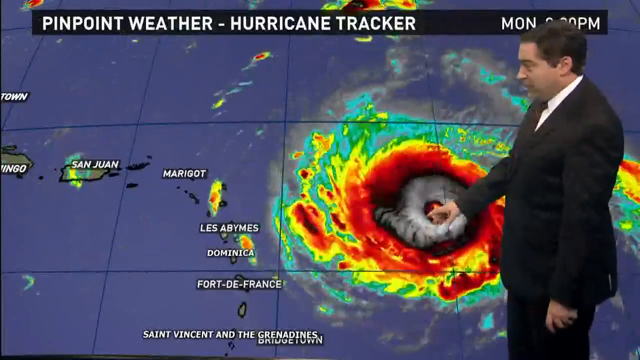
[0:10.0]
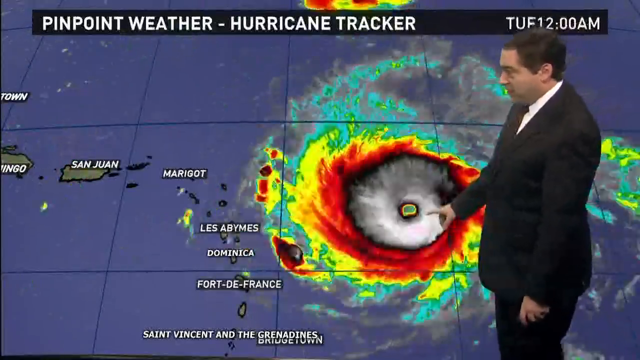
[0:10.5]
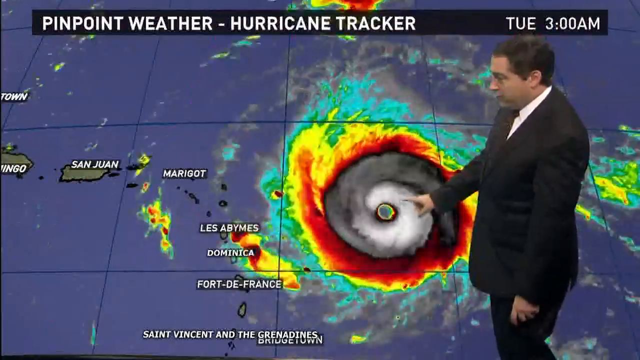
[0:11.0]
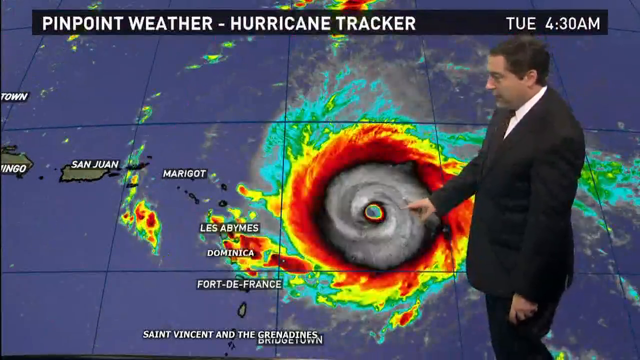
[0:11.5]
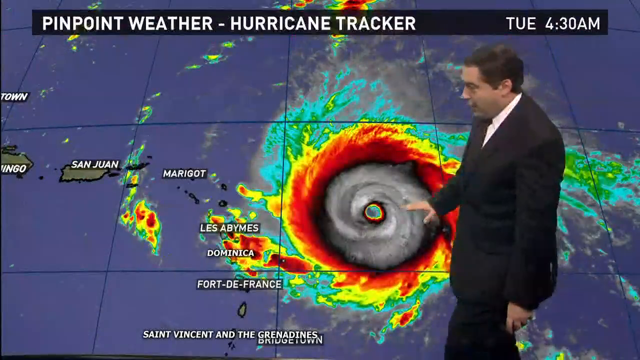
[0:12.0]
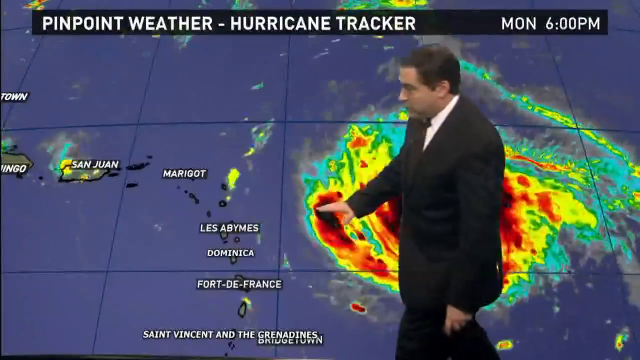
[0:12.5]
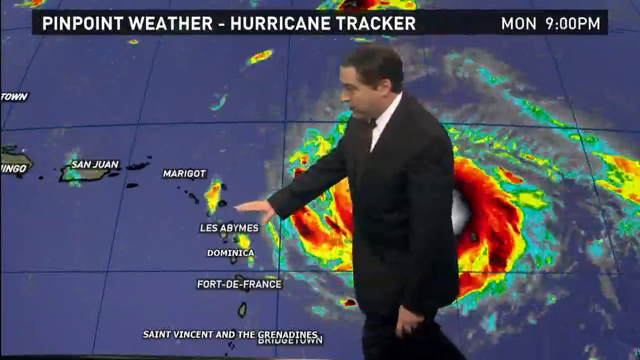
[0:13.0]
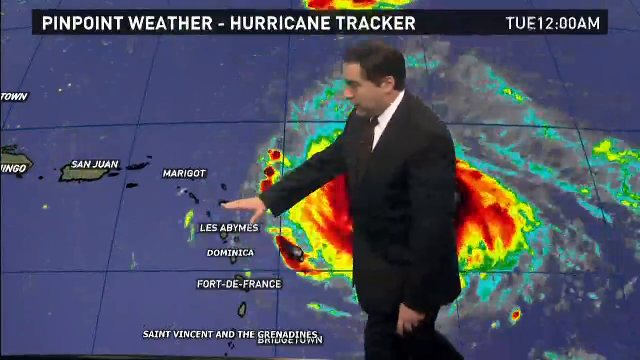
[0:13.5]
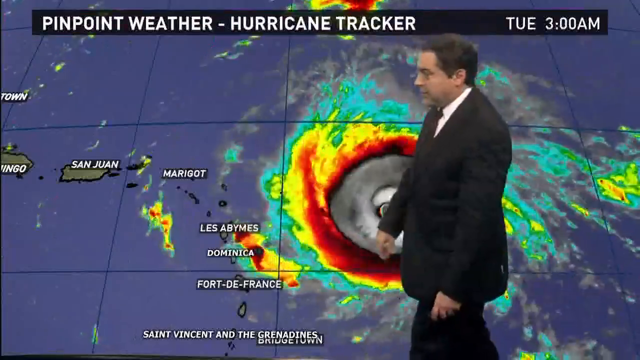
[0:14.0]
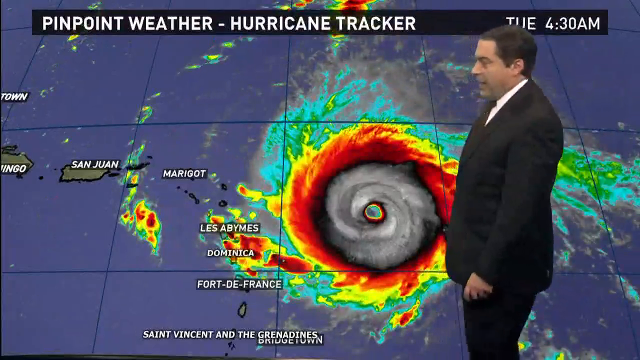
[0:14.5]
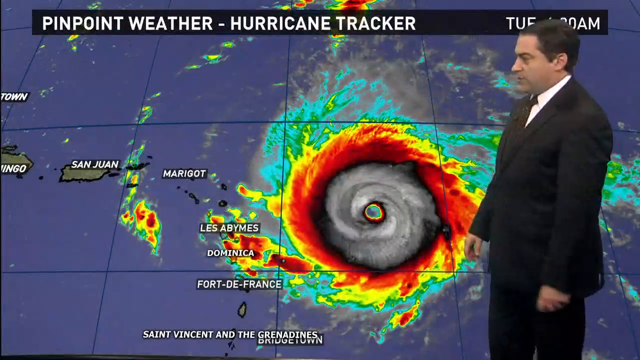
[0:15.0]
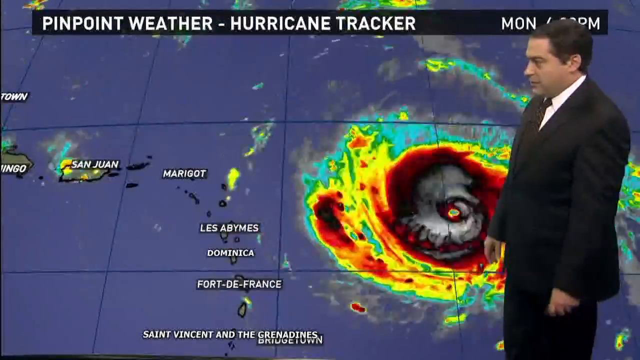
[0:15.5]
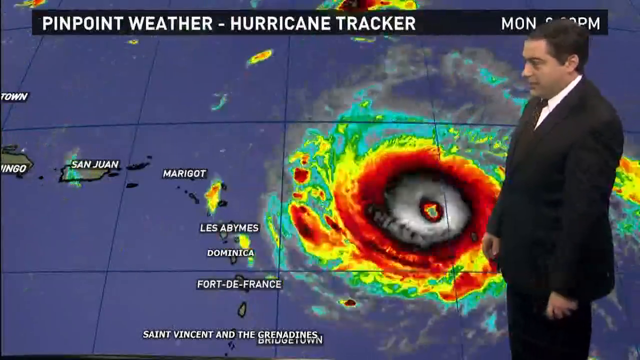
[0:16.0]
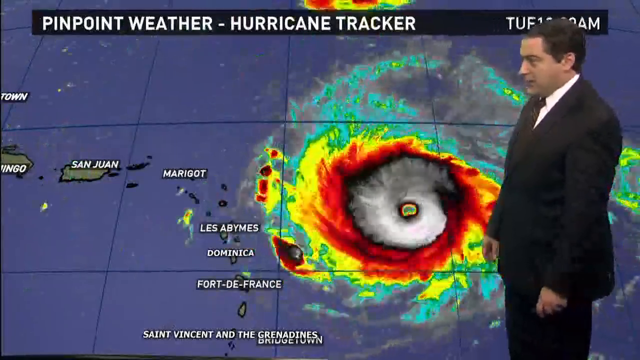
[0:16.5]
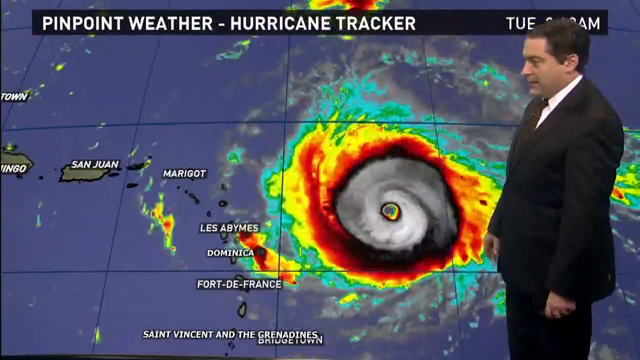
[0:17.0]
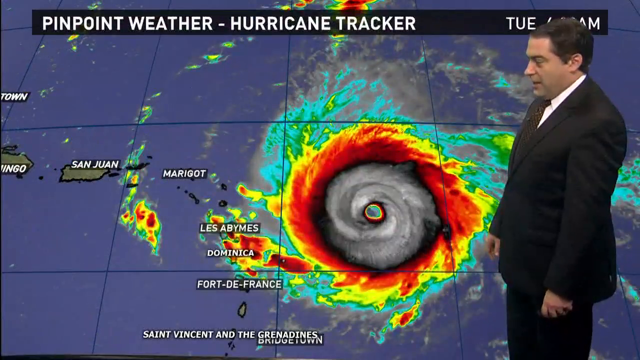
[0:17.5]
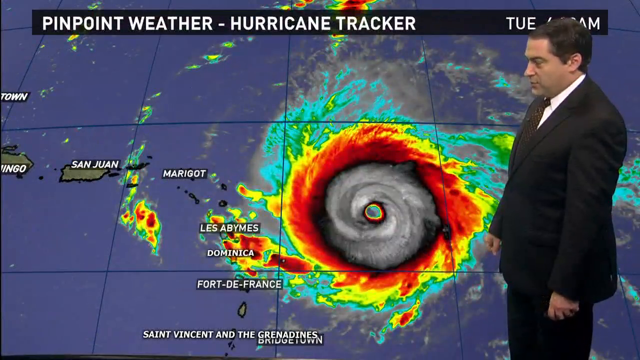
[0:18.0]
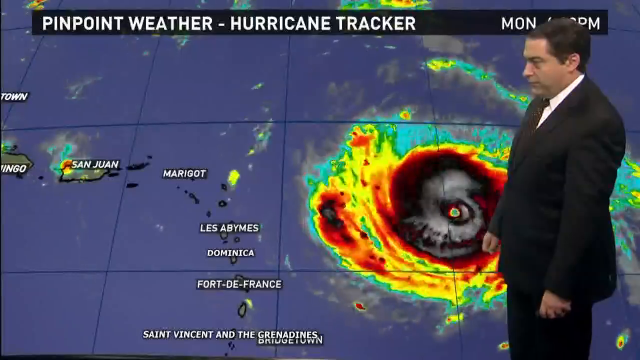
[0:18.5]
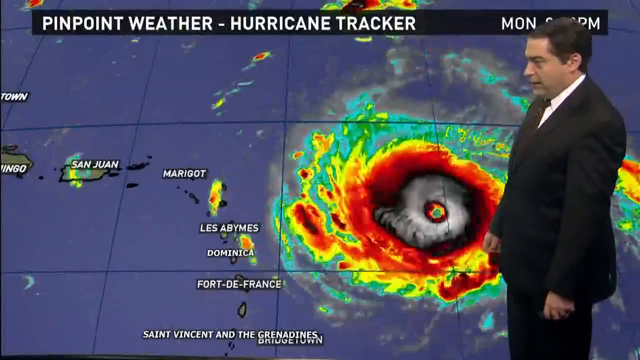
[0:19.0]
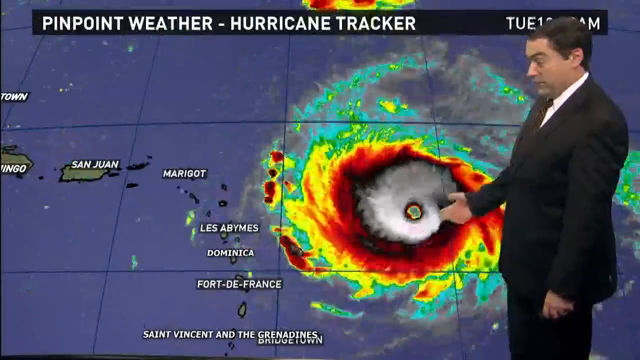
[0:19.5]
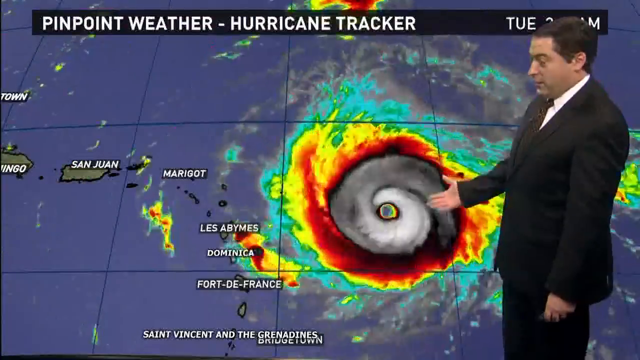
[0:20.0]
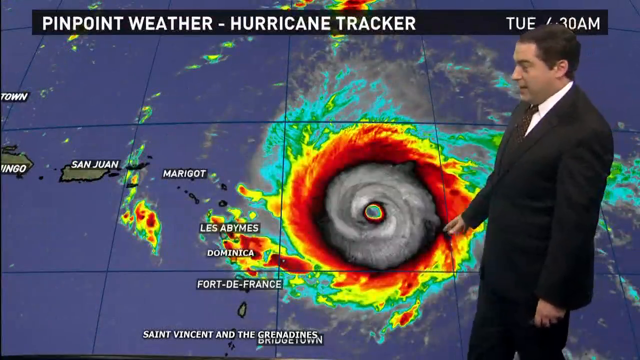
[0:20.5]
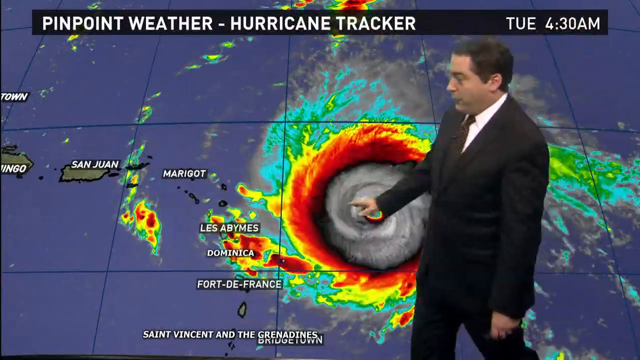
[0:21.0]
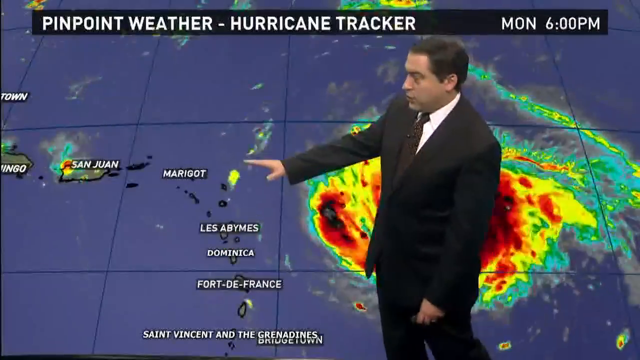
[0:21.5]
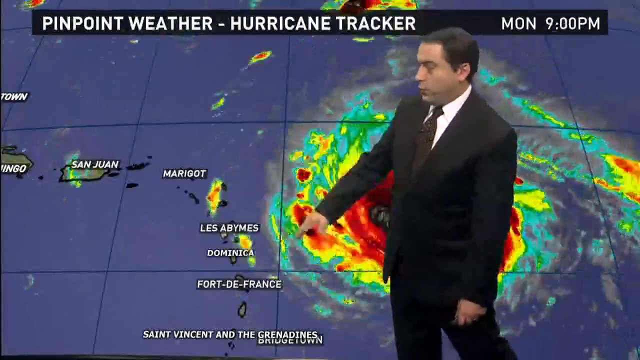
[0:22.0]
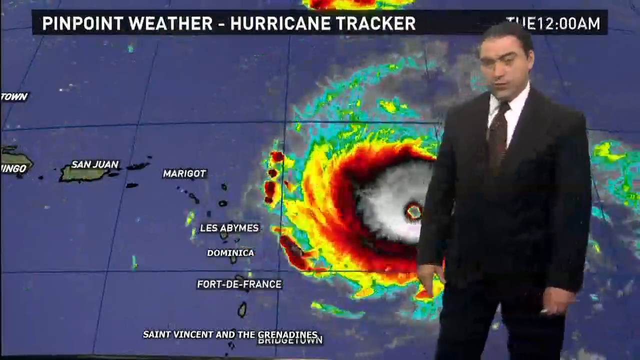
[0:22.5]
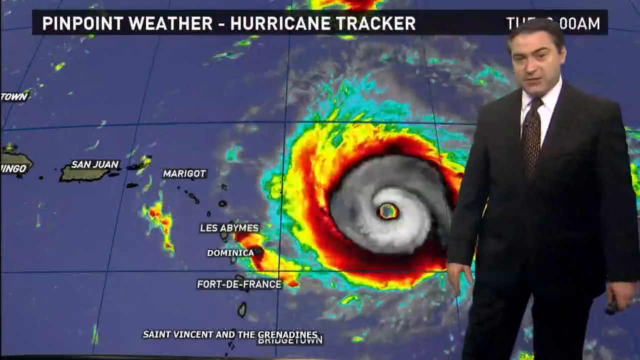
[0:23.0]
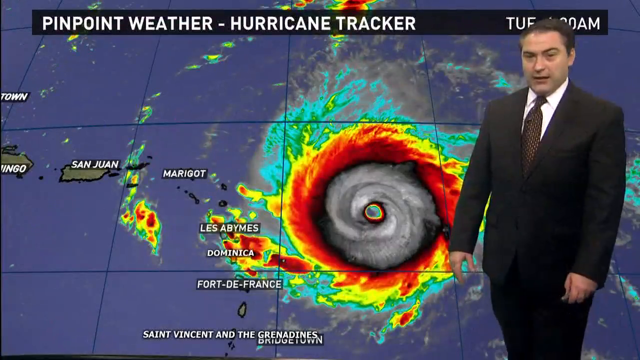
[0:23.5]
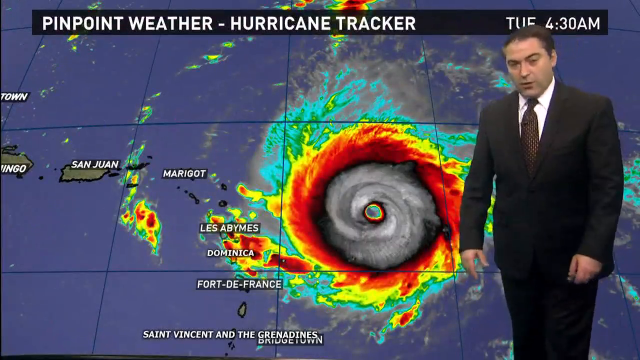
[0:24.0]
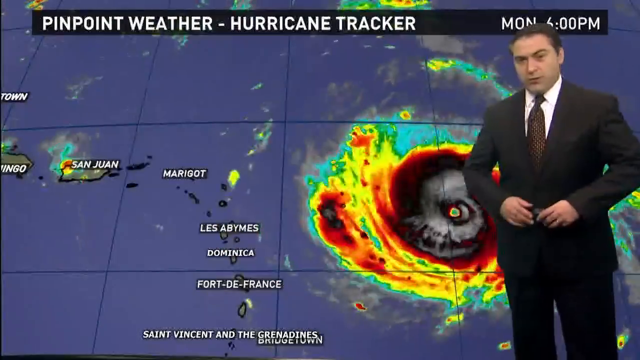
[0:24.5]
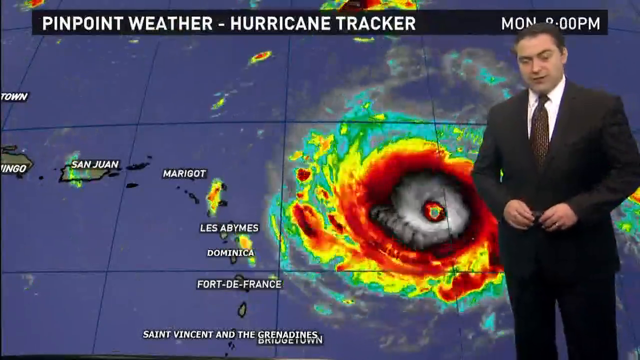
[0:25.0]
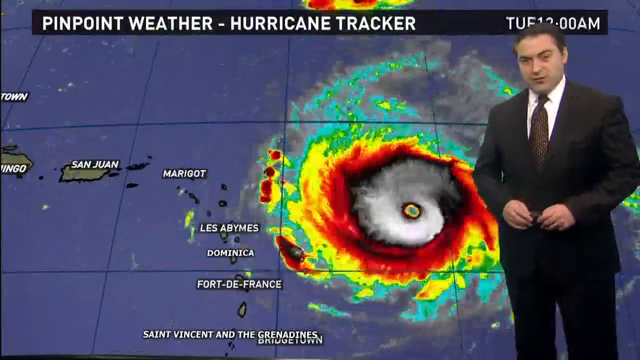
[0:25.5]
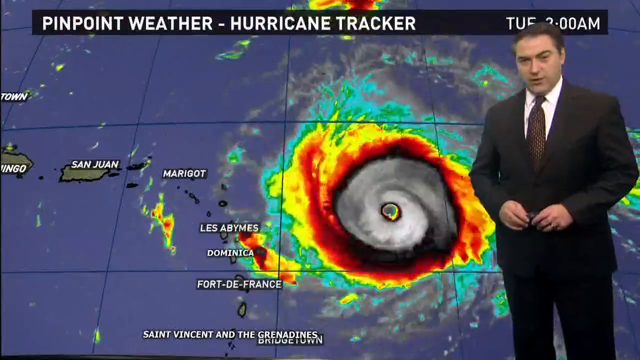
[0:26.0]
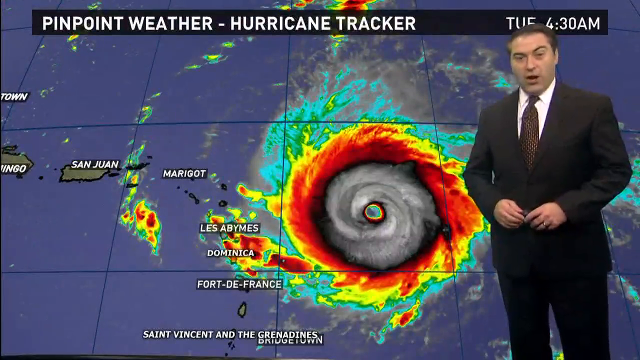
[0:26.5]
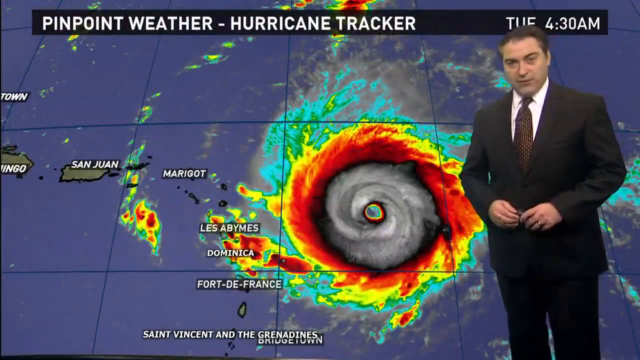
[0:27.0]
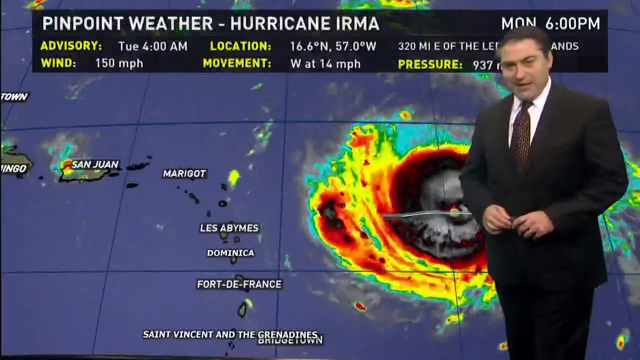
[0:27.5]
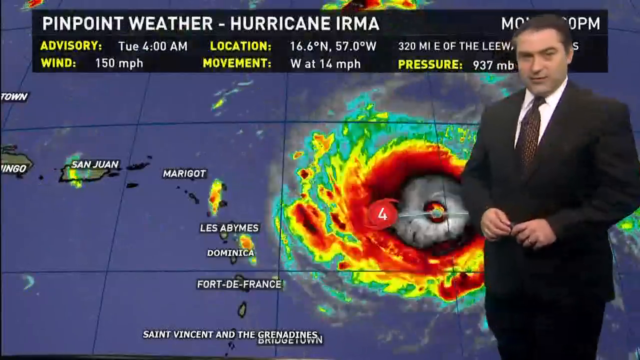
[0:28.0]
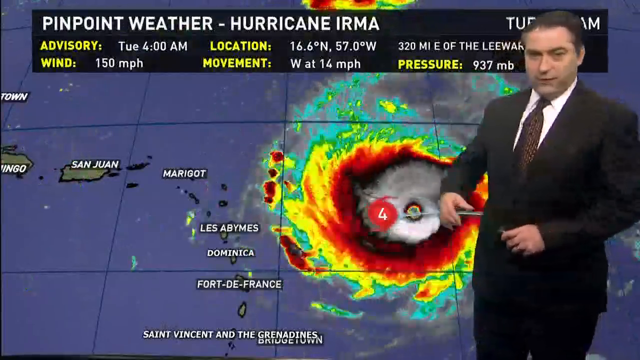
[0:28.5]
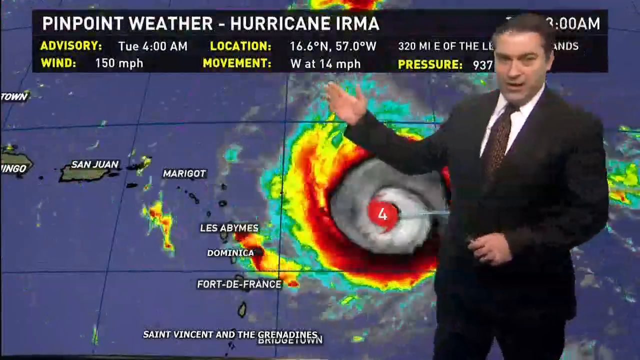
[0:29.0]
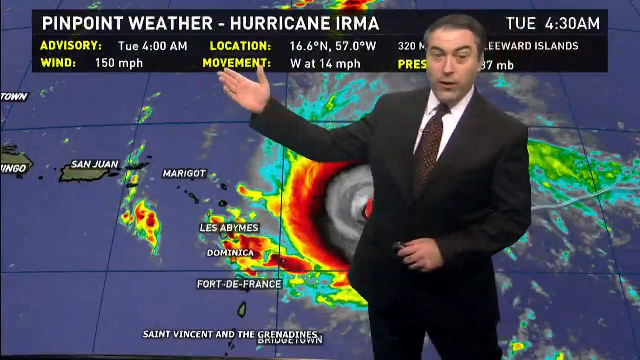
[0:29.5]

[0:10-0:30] A weather map shows a hurricane in the Caribbean. The map seems to show Cuba and the Dominican, San Juan, Marigo, Dominica and Port-de-France, with the hurricane on the right side of the screen. The newscaster stands with his right side towards the screen, using his right arm to point at the eye of the hurricane. He walks slowly as the hurricane moves along the screen behind him, still pointing at it, and makes a sweeping hand gesture in the direction it will be going. He then turns towards the camera and talks, facing forwards. At the top, the "pinpoint weather hurricane tracker" text moves from Monday to Tuesday at 4.30 a.m. The black box in the back then changes to "pinpoint weather hurricane Irma", giving the advisories, the wind, the location, the movement and the pressure. The weatherman points towards the black box at the top of the screen behind him.